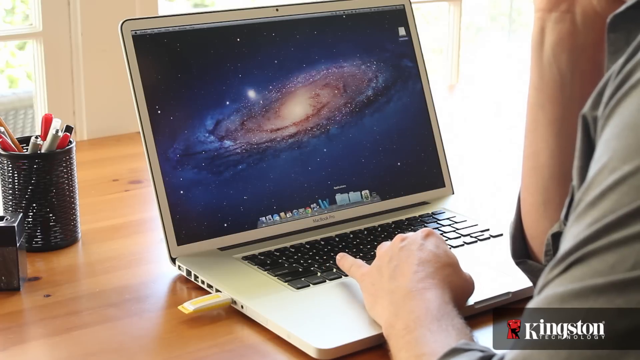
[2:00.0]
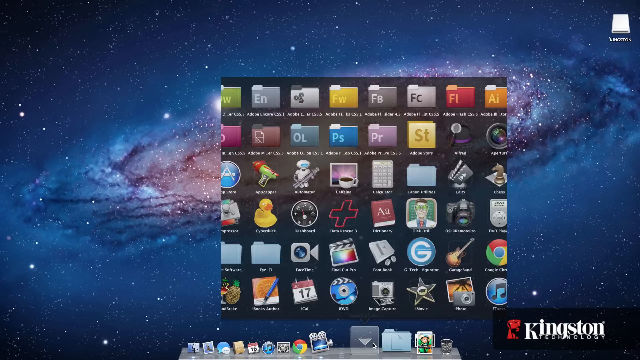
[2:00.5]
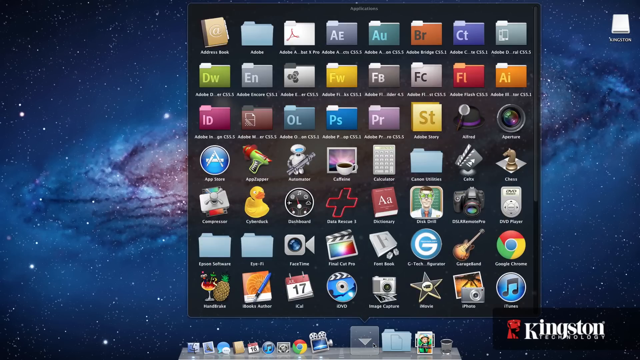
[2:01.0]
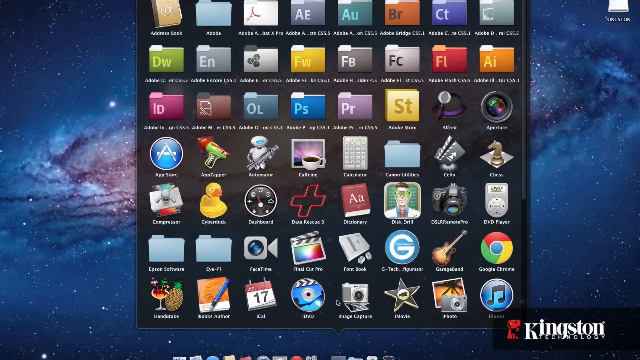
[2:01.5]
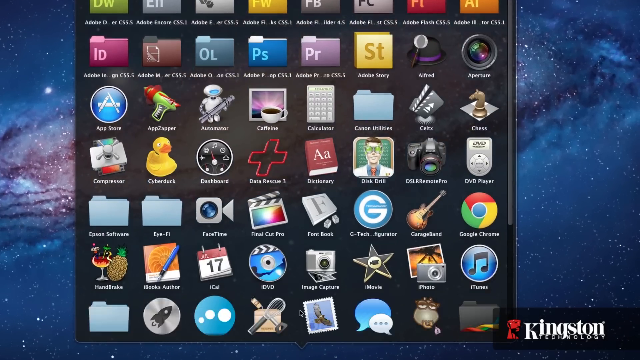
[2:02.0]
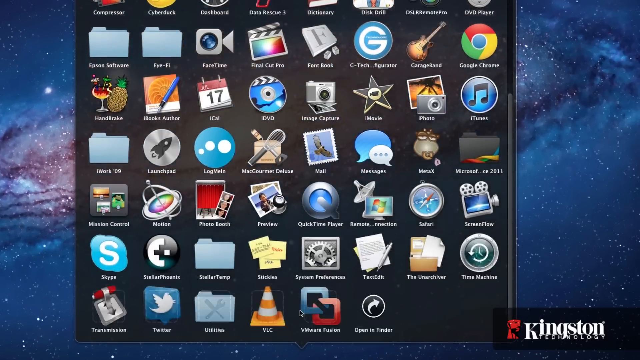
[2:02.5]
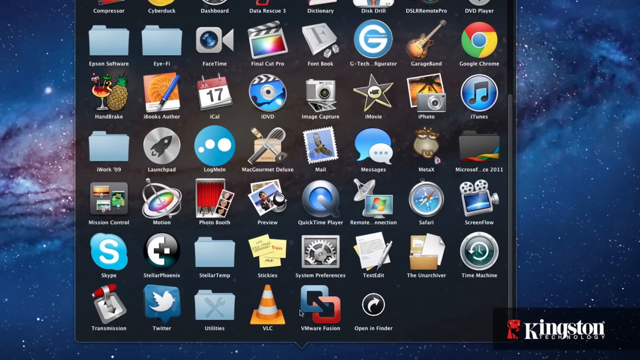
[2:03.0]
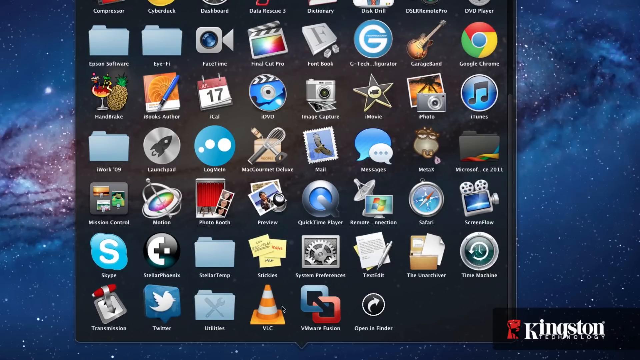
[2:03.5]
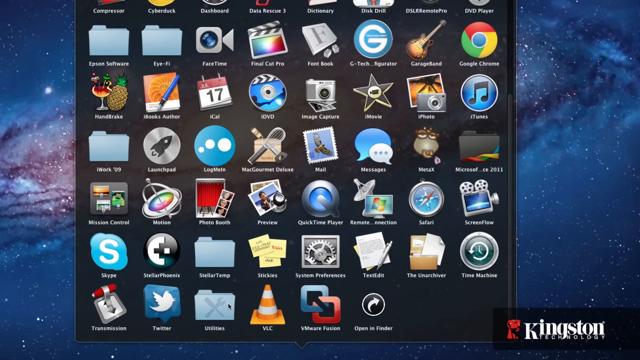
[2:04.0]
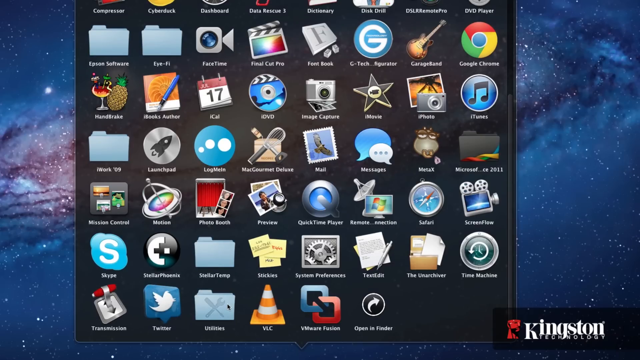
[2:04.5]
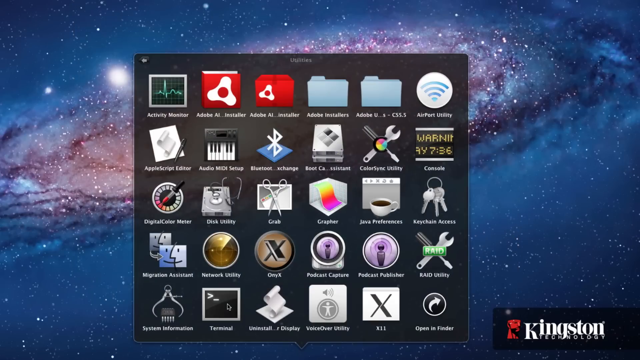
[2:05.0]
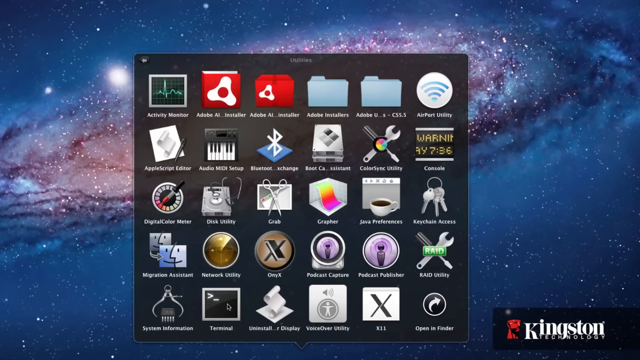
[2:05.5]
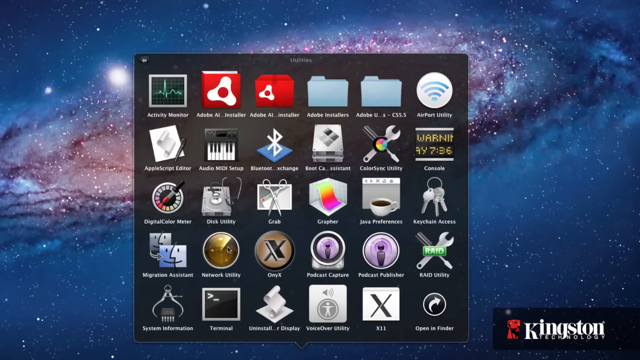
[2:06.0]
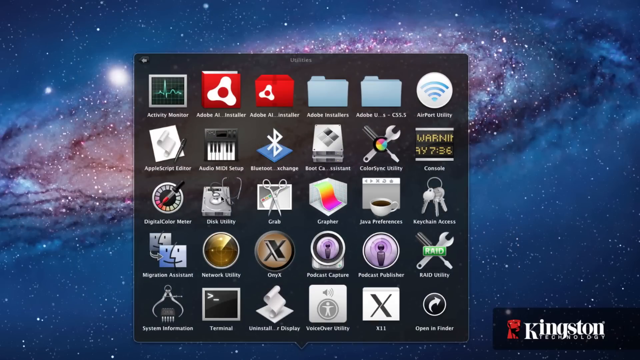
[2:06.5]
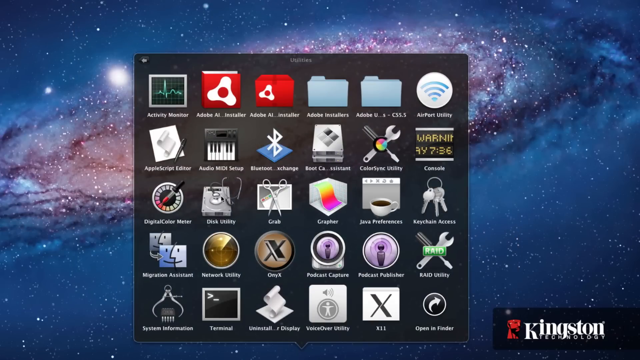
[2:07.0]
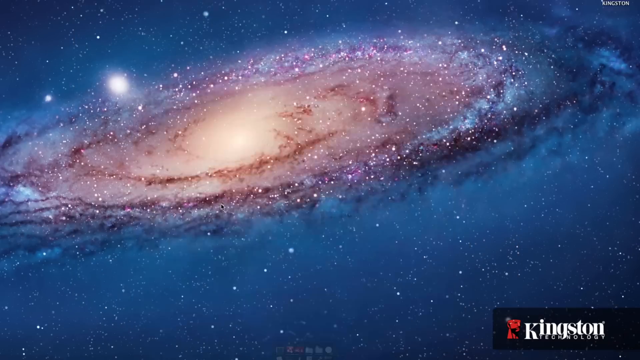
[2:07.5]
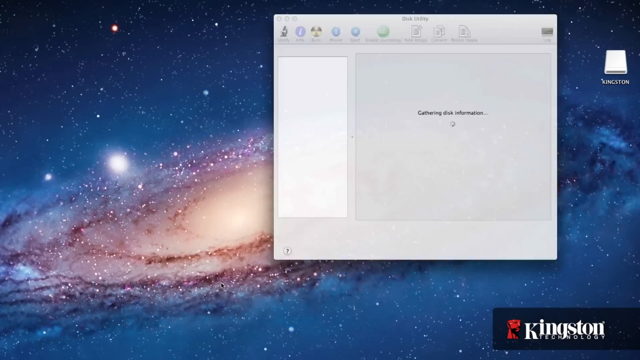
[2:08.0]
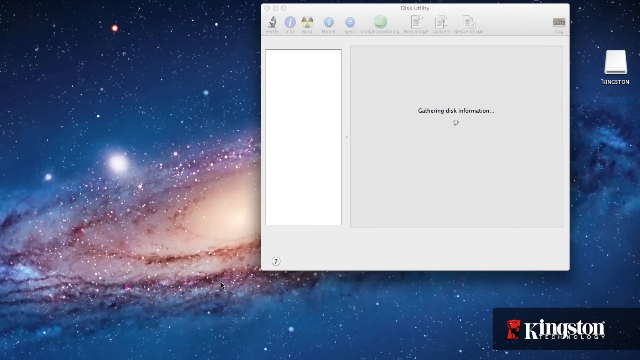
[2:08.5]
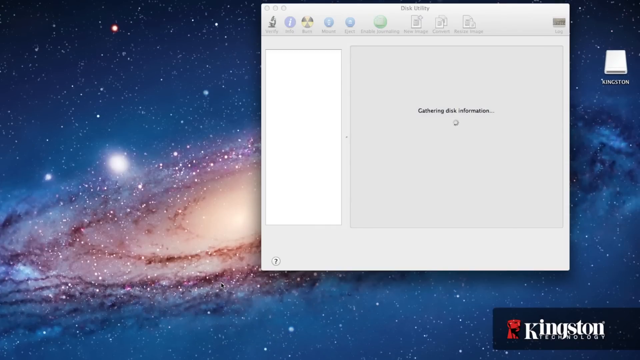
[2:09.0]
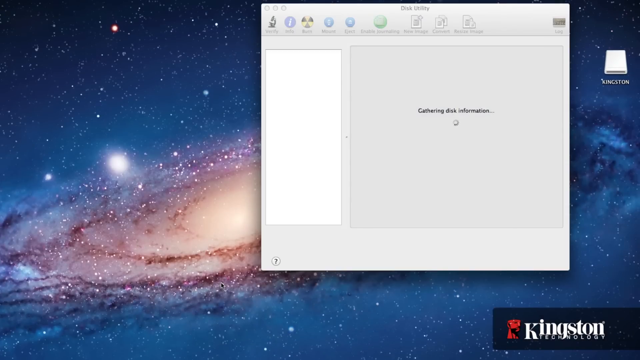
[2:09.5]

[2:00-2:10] A person is sitting at a computer area, kind of like an oak table, using a USB port on the computer. The person appears to be a man; only his arms and hands are visible, with what looks like a man's shirt and fingers. He opens an area on the computer showing files and games, including a rubber duck, a calculator and Google Chrome, among the little apps and icons. Scrolling down to the bottom, he clicks on the files area, which opens with a spinning circle in the middle and the text "gathering disk information." The computer is like a laptop, gray with black keys, and appears to have an outer-space picture like a nebula in the background.